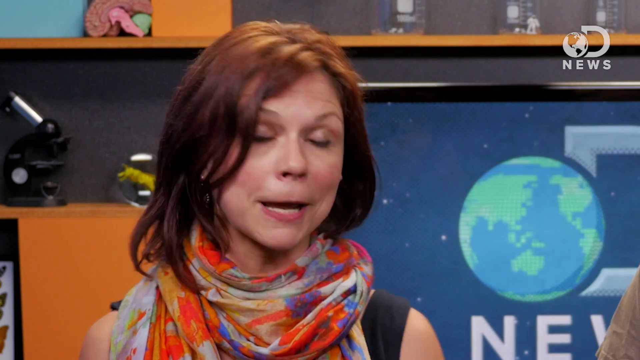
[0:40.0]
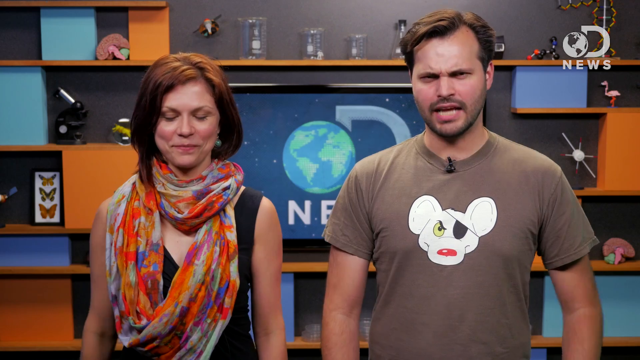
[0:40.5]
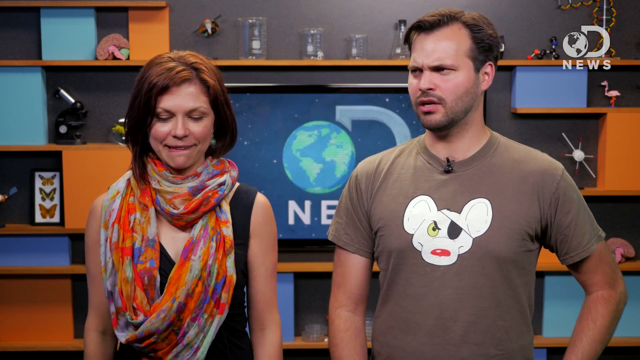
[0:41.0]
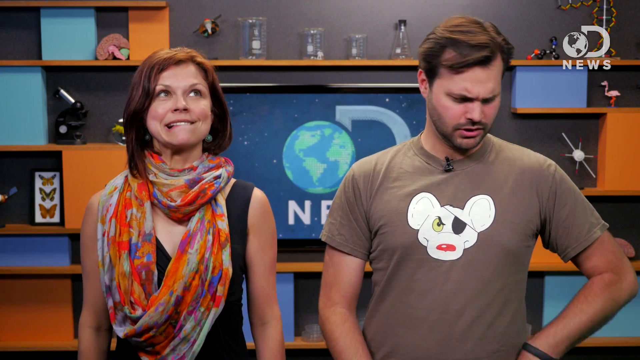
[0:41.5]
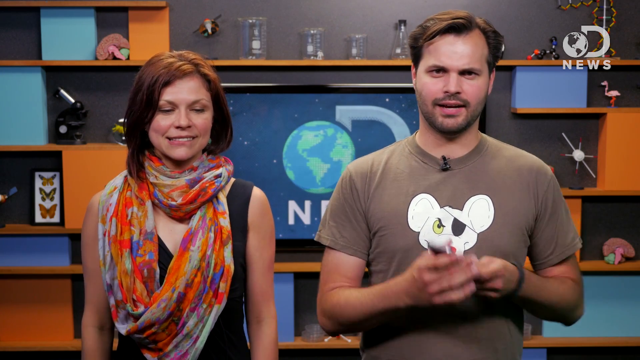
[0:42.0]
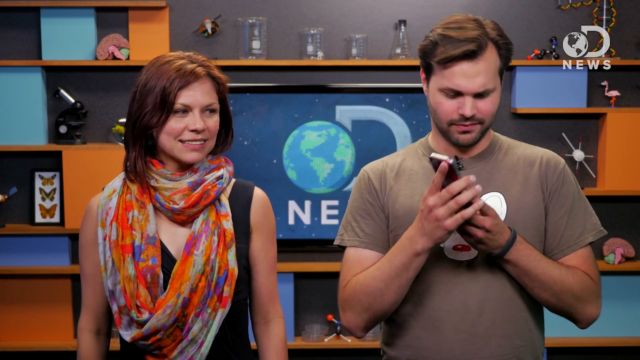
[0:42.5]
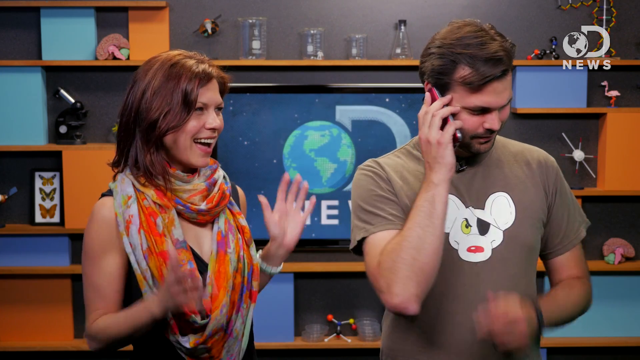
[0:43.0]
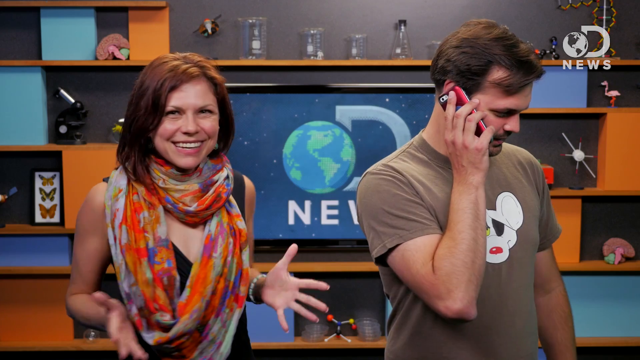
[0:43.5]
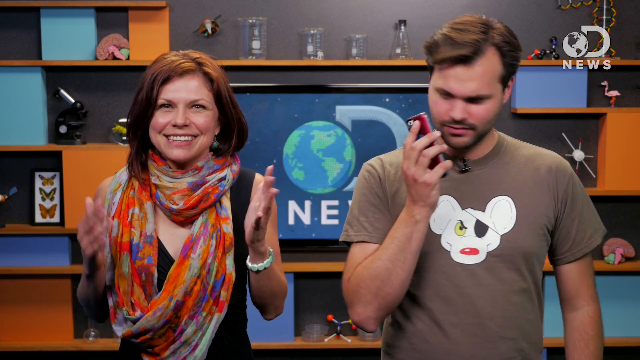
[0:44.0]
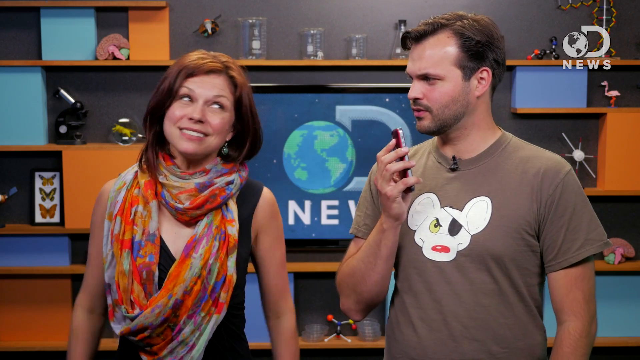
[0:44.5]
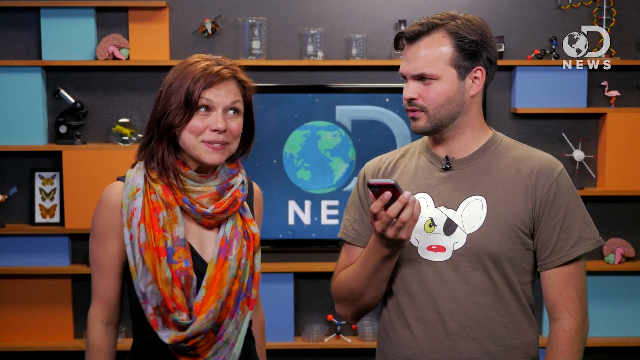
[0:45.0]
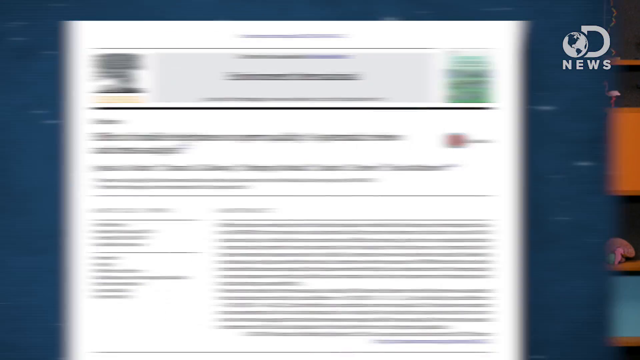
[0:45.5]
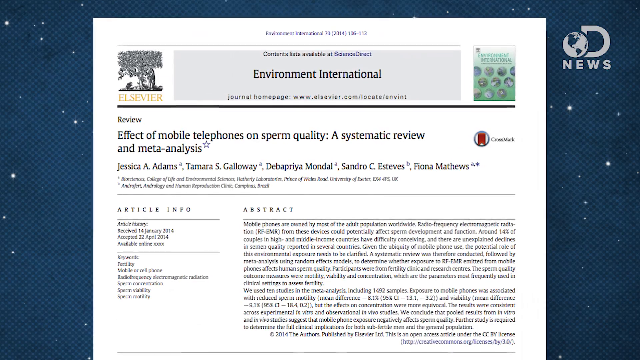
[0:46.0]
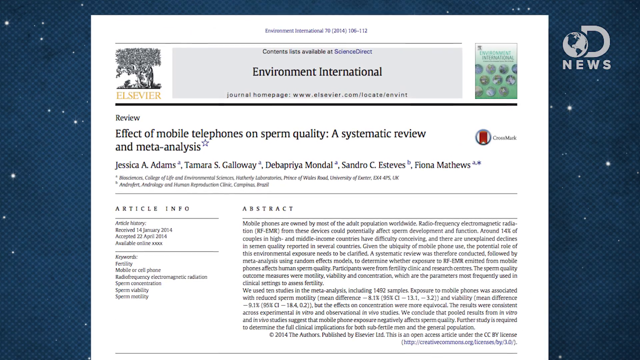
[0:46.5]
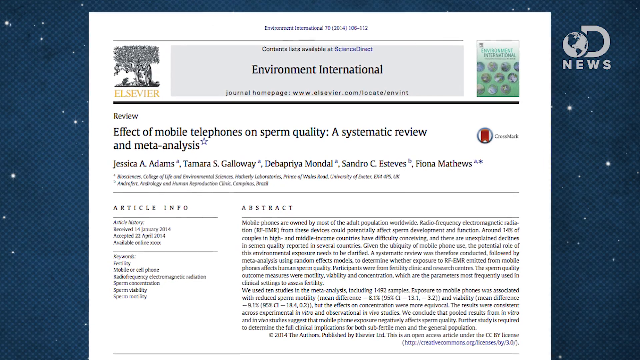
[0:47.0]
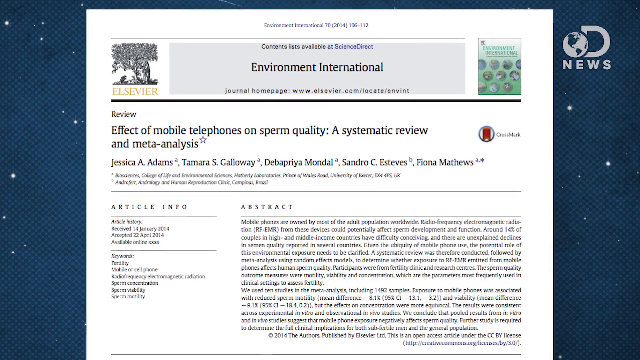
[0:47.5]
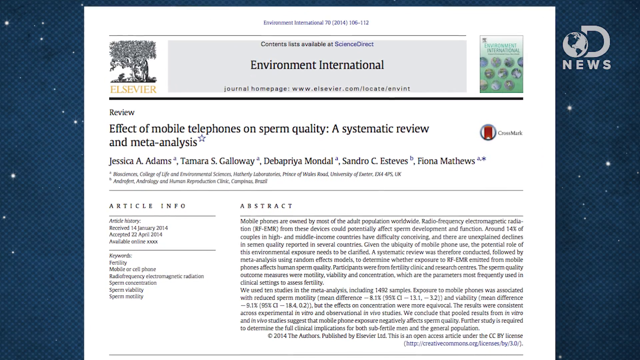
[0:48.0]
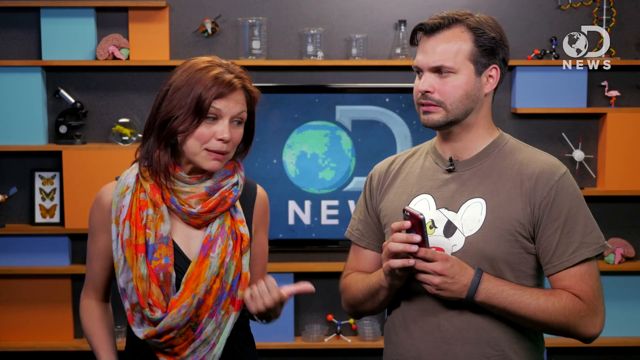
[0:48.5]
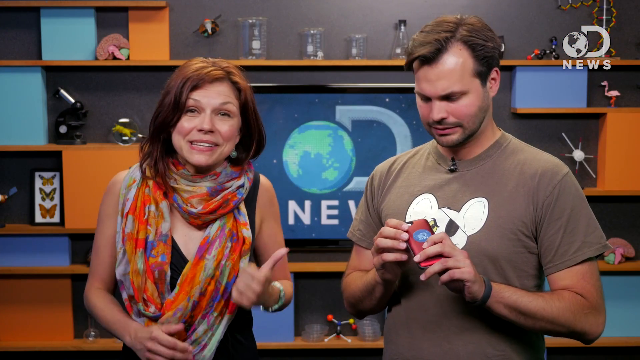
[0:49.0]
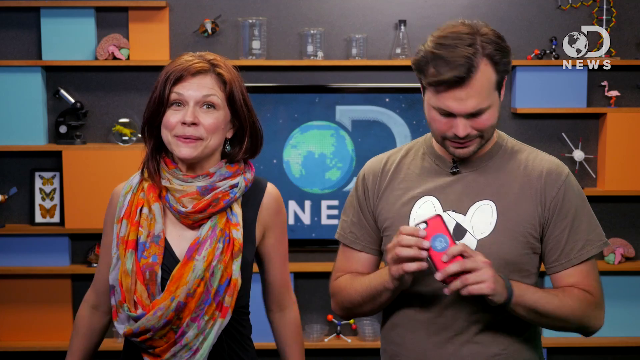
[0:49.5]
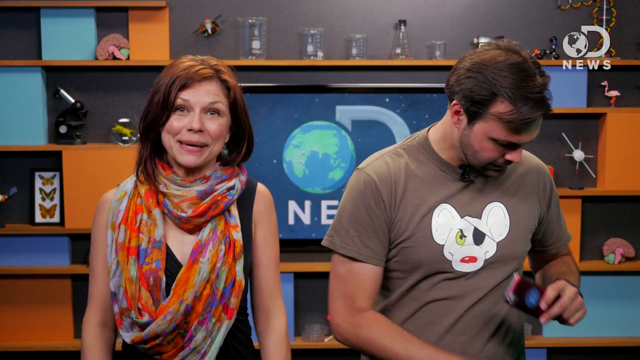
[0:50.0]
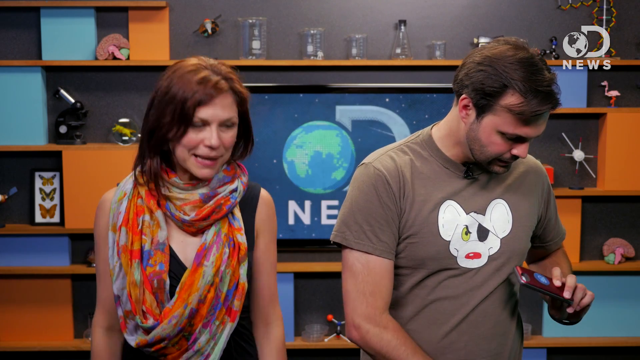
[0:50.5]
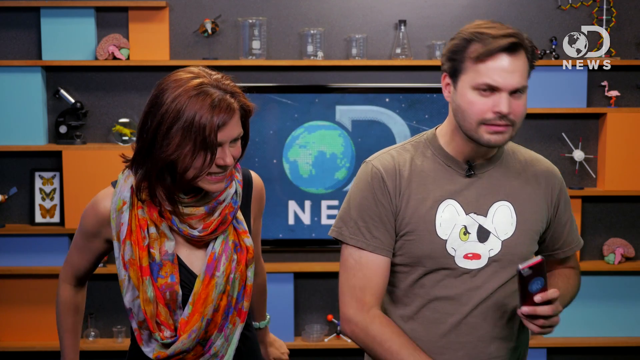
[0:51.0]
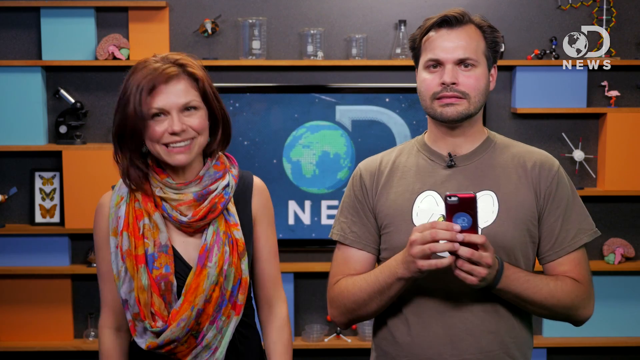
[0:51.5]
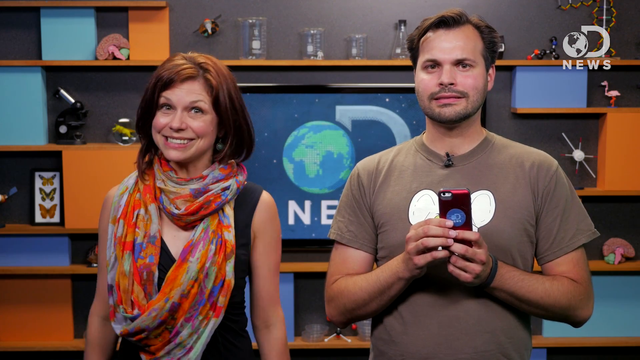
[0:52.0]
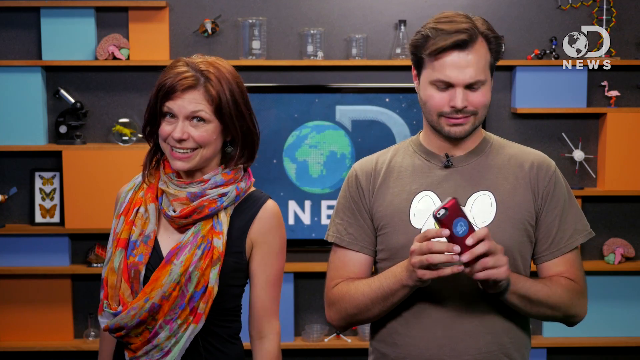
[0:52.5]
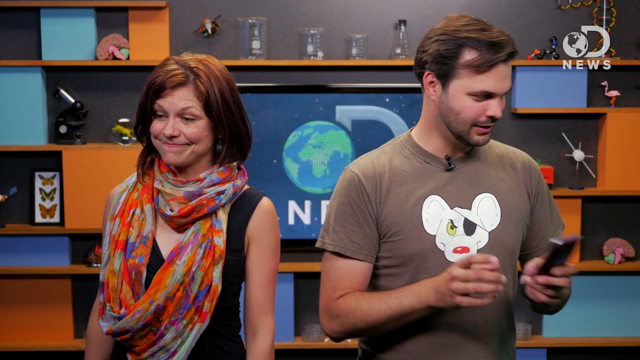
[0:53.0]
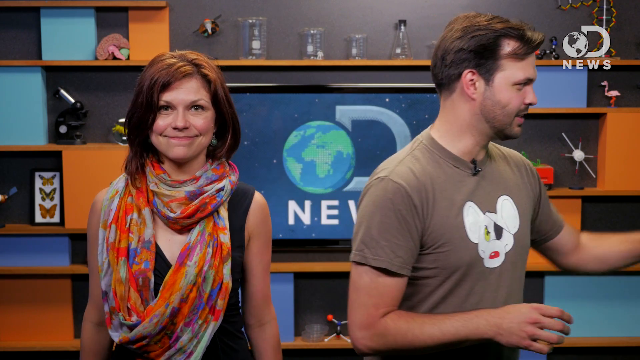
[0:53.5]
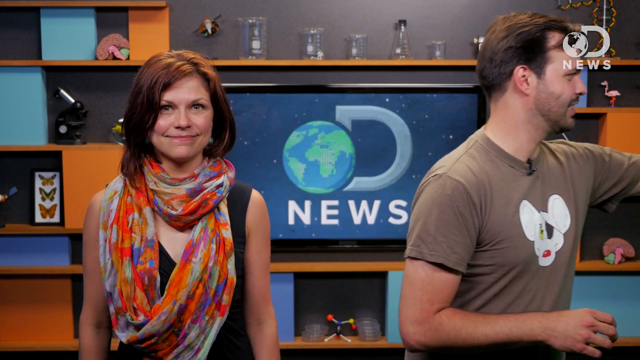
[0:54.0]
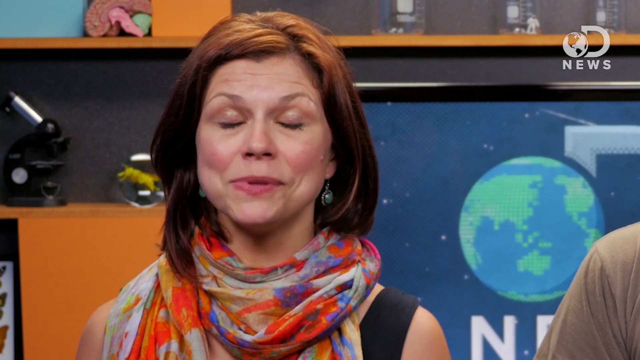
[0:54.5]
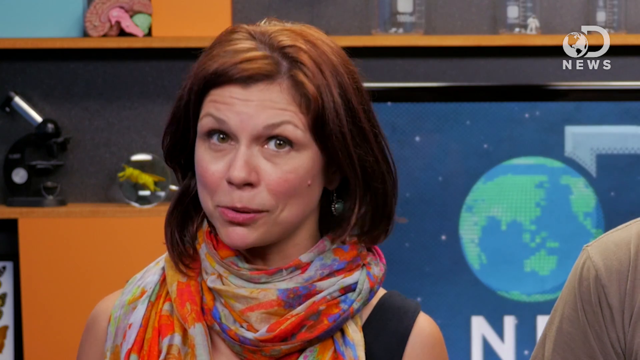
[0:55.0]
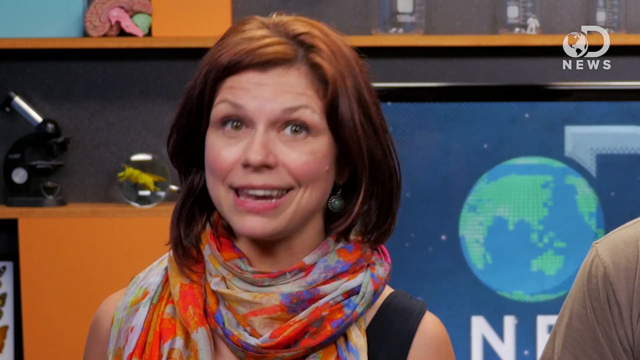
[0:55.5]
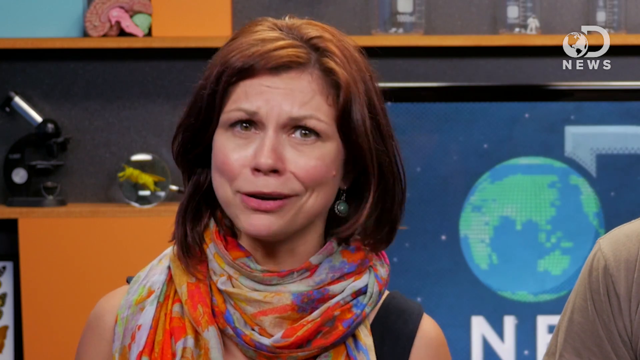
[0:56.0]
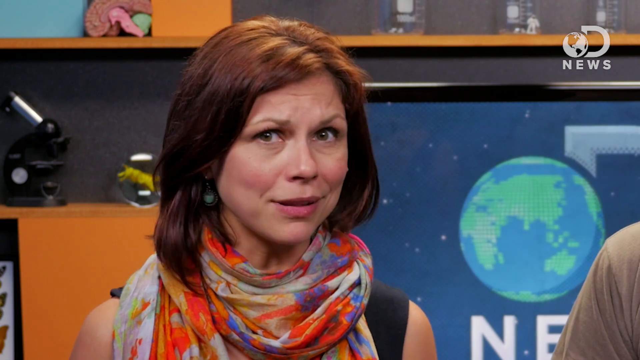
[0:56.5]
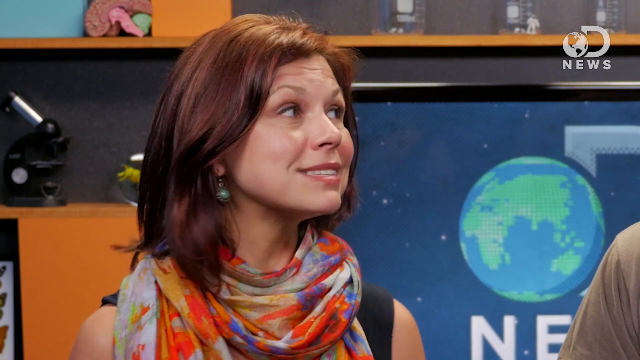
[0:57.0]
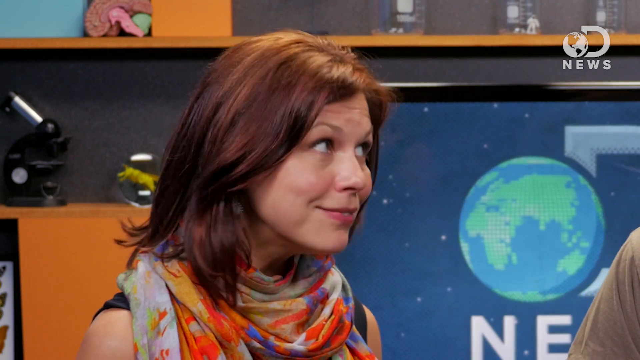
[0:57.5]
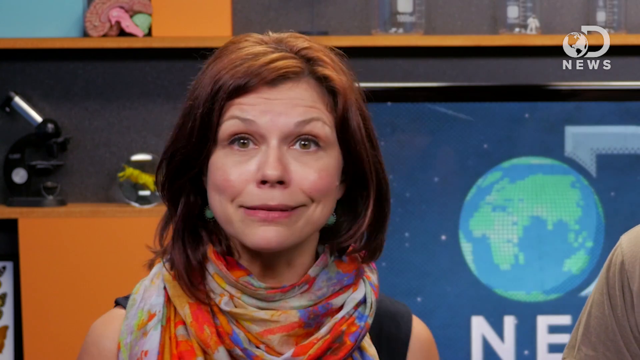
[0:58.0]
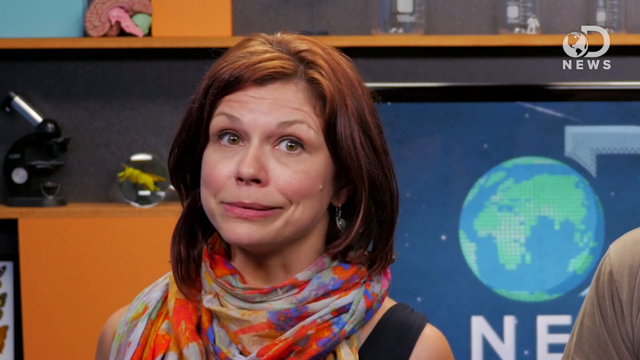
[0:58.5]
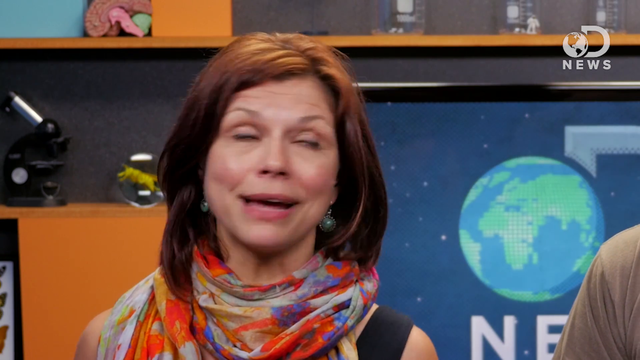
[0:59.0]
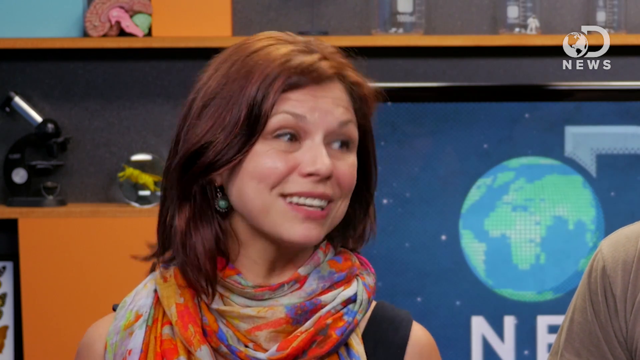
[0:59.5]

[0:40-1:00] A close-up shows Caren, who has reddish-brown hair. The D-News logo is visible, along with a microscope, a little orange, a gray wall and some flasks in the background. The camera goes back to both of them, showing more of the flasks. In the D-News logo the "news" part is in white, with stars in the graphic on the monitor. He wears an almost grayish T-shirt with a white mouse on it that has a red nose and an eye patch. She wears an almost tie-dye-looking scarf with orange, white and blue in it, and maybe some red. She is smiling. The man is pretending to be on a phone. A paper is shown, "Environment International," with an article about the effect of mobile telephones on sperm quality. The video goes back to them. His phone is red. She wears a sleeveless black shirt and a little pinkish lipstick.